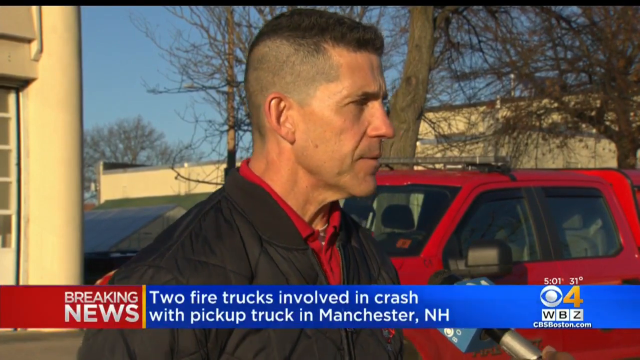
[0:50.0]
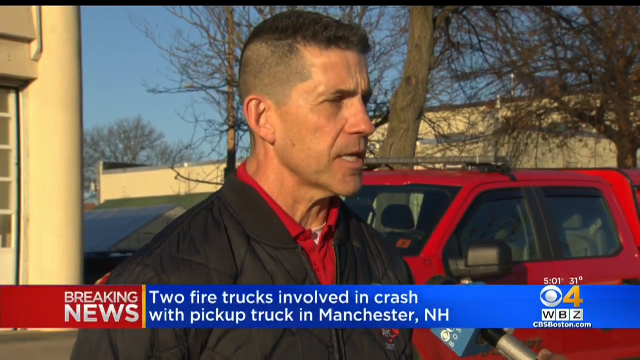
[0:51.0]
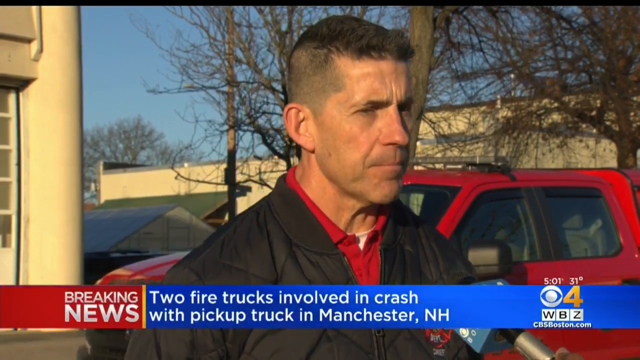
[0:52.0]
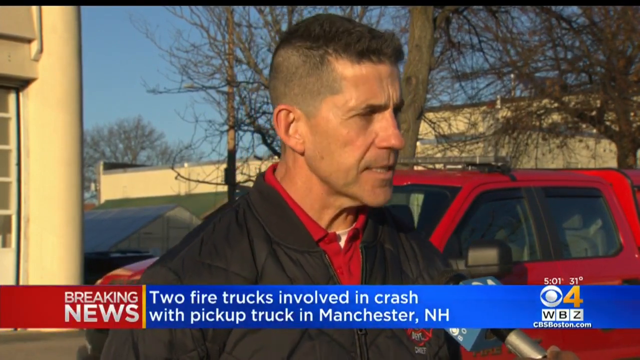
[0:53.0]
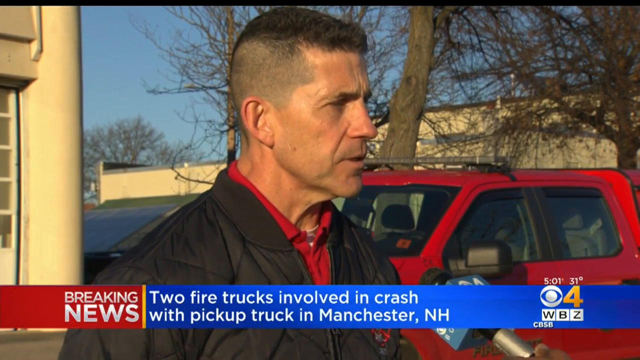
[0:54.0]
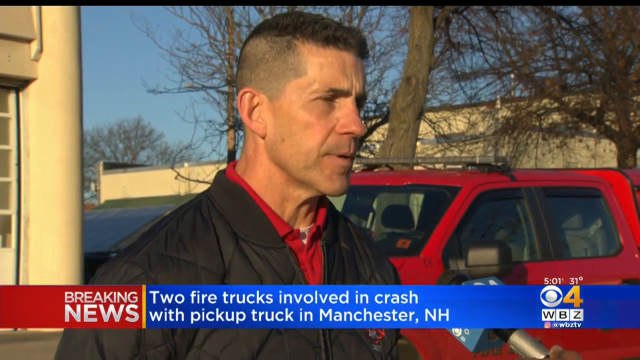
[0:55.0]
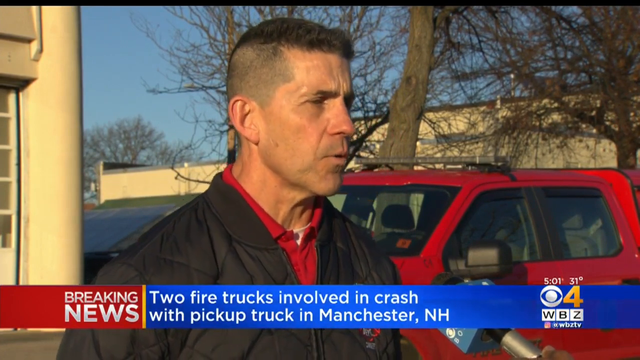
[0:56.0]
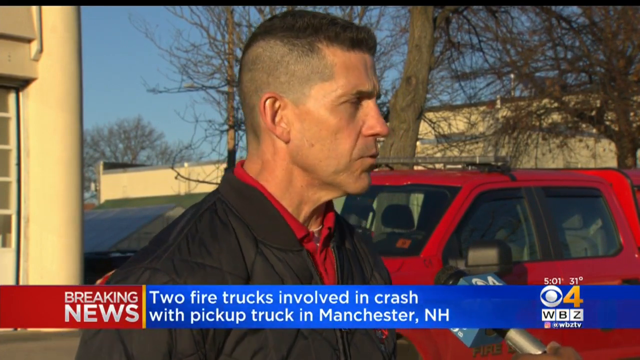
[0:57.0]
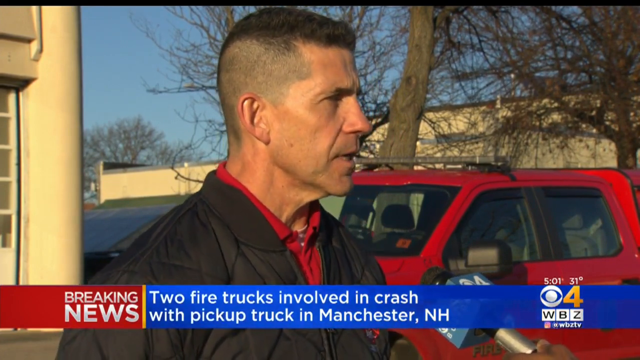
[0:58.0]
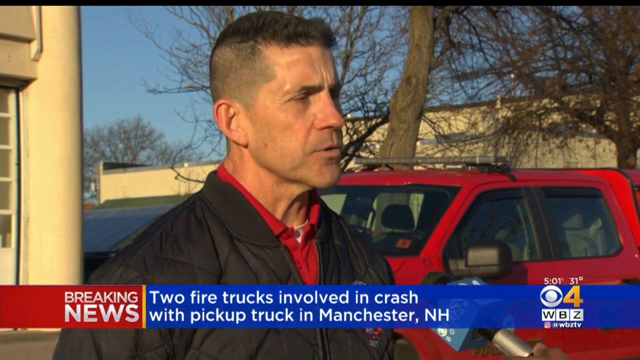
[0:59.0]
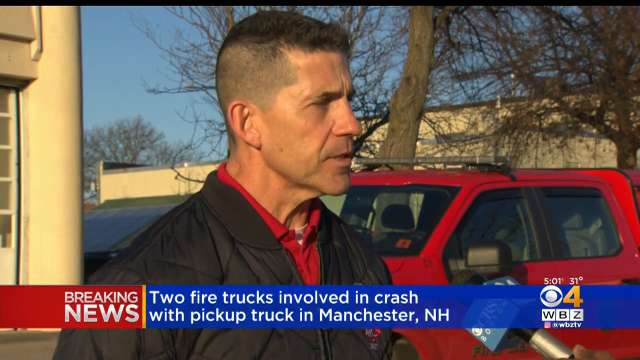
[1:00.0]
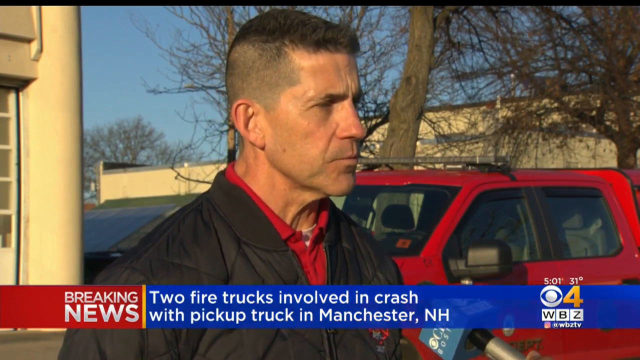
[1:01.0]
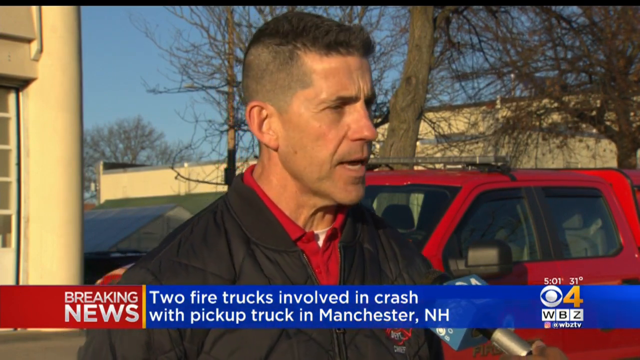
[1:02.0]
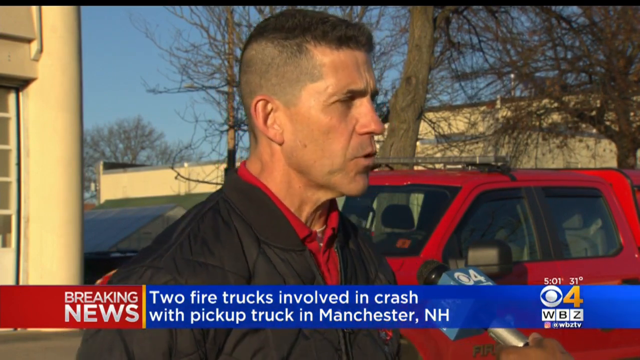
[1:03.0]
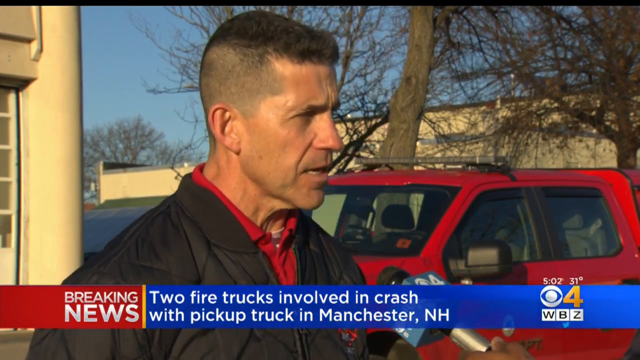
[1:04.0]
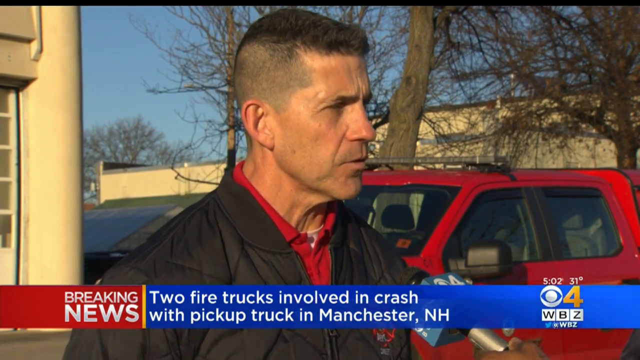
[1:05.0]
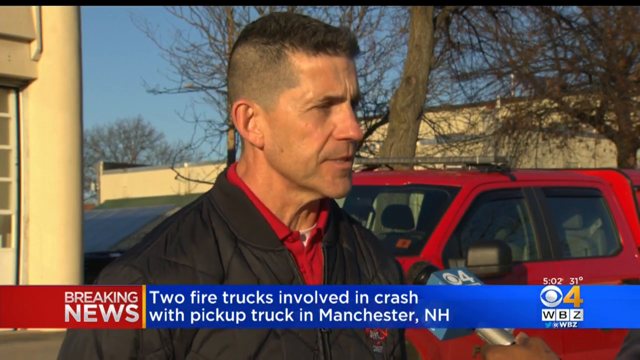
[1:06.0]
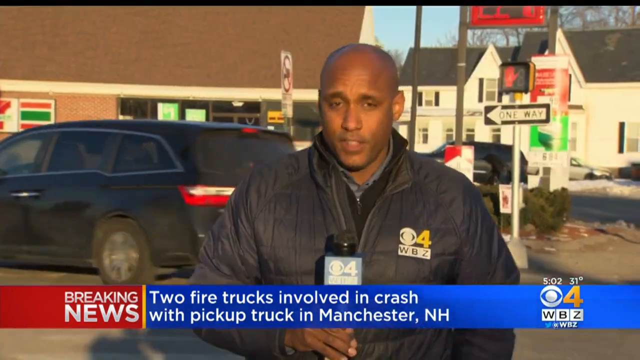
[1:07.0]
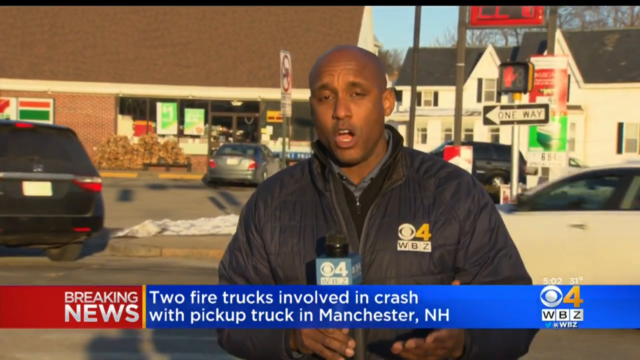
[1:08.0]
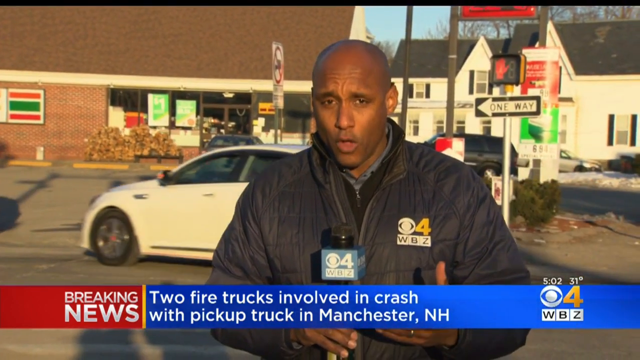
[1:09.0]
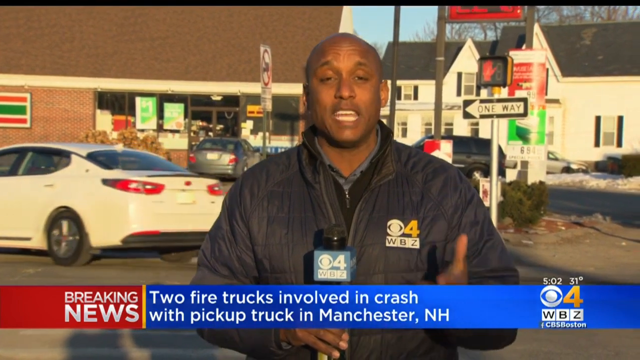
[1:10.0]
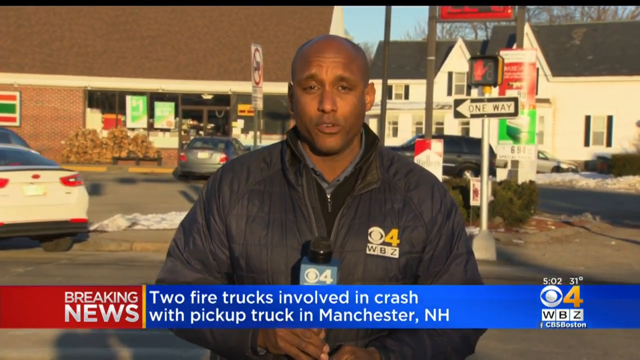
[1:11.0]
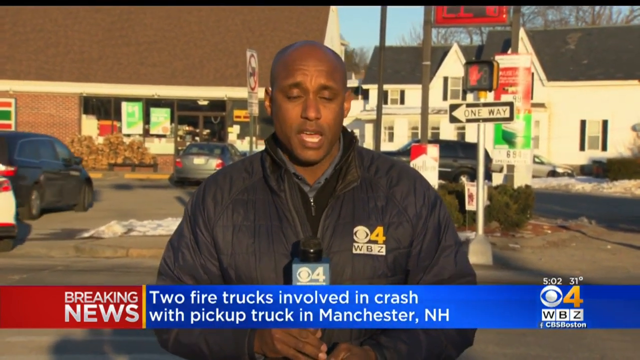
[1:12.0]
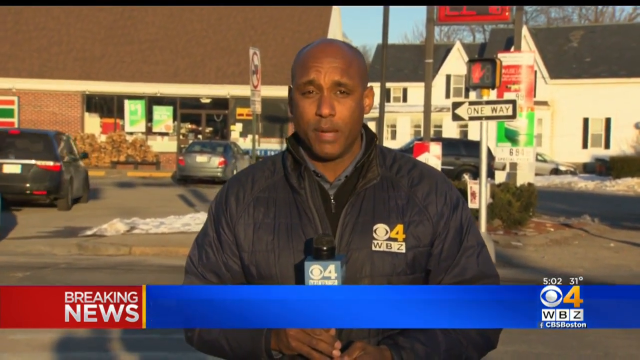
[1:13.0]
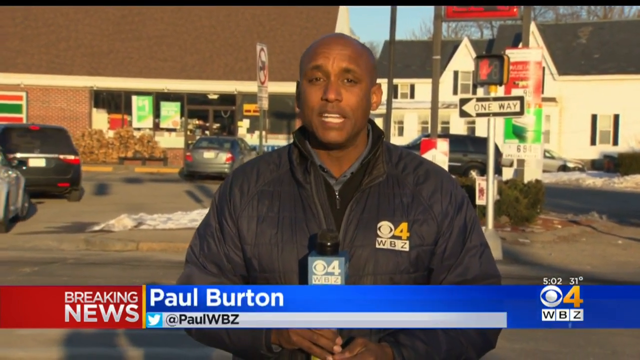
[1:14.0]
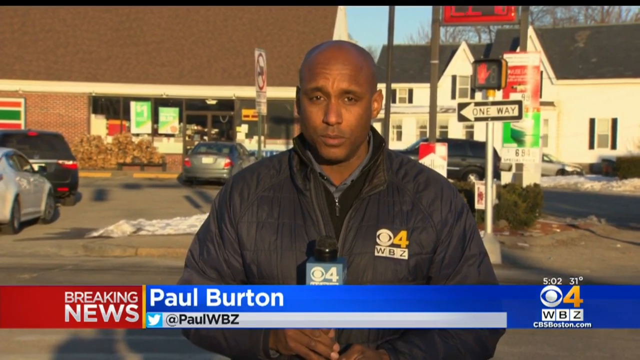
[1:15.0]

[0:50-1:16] Dan Goonan is still talking, with a microphone bearing the WBZ logo in front of him. The shot cuts back to the newscaster on the street, in front of a 7-11, presumably the one in front of which the fire trucks crashed. Some cars are parked in the parking lot and other cars drive behind him. What look like houses are in the background to his left, and the 7-11 is behind him to his right, with a stack of firewood in front of it. Some street signs are visible. Two cars pull into the 7-Eleven parking lot. A scene wipe begins, probably leading to the news anchors, but the video cuts out before they appear. The newscaster, Paul Burton, is a Black man wearing a dark blue jacket over a black sweater-type garment and a dark blue collared shirt.